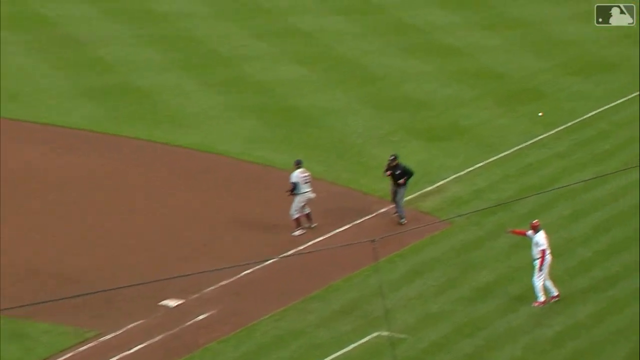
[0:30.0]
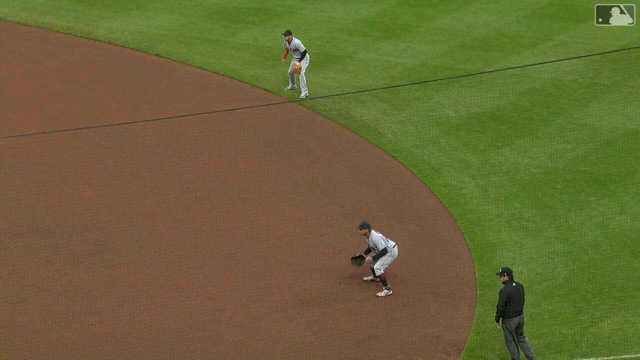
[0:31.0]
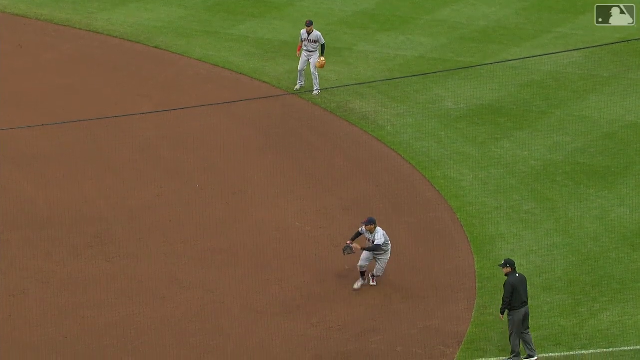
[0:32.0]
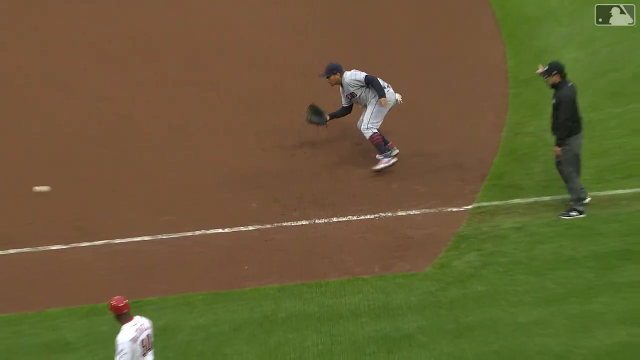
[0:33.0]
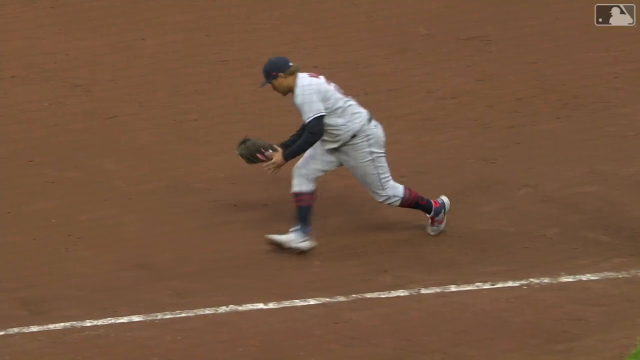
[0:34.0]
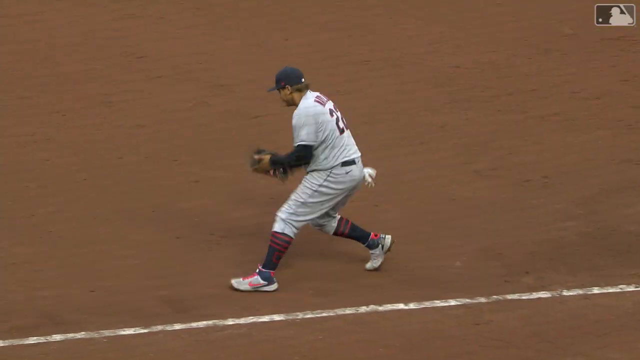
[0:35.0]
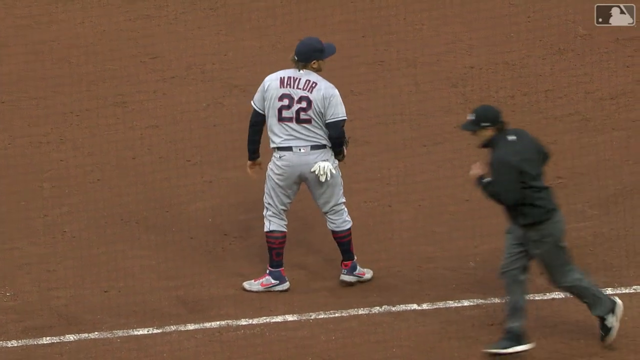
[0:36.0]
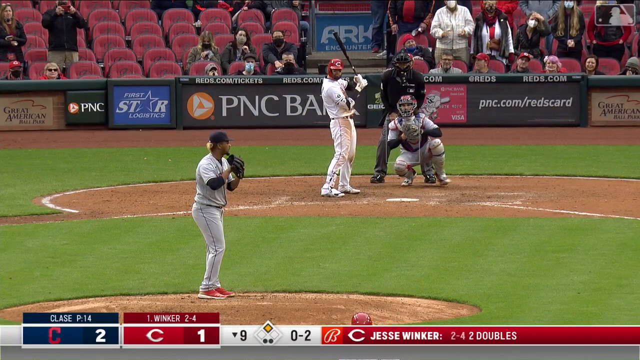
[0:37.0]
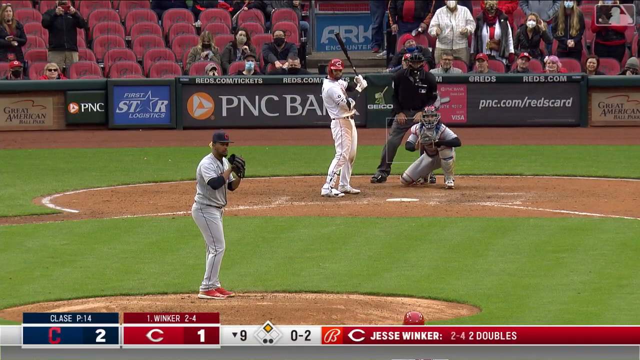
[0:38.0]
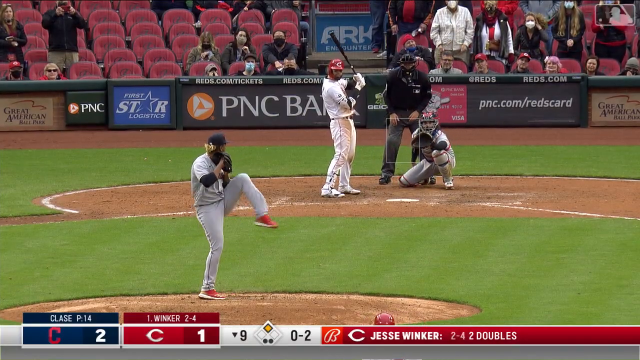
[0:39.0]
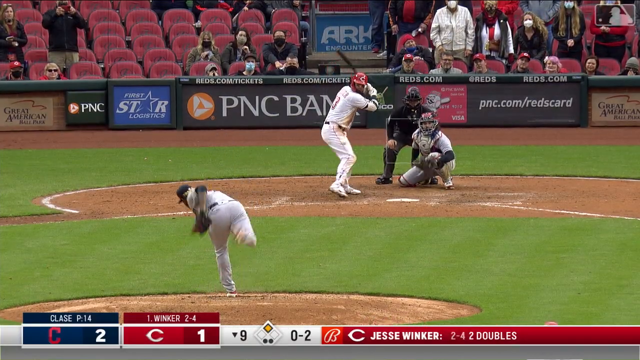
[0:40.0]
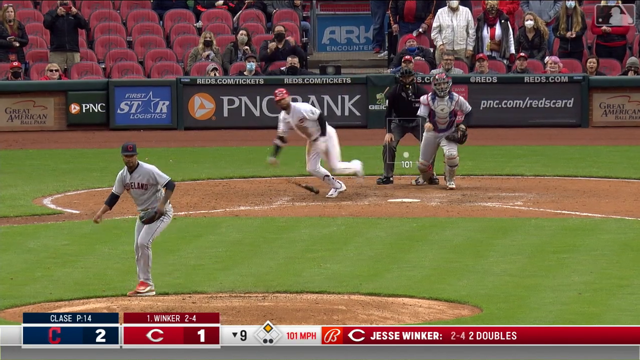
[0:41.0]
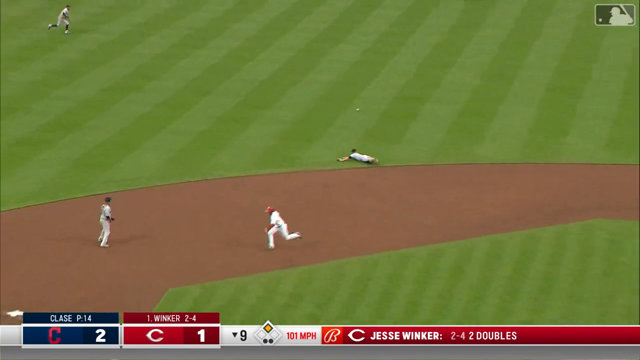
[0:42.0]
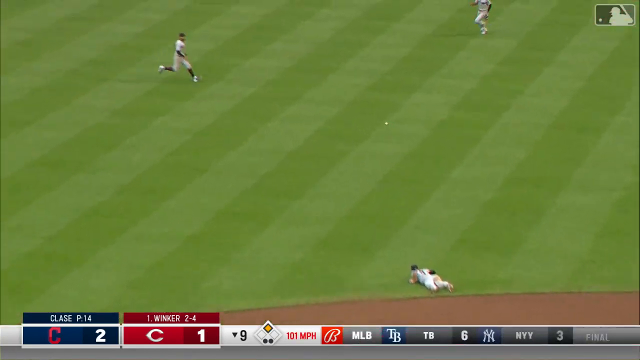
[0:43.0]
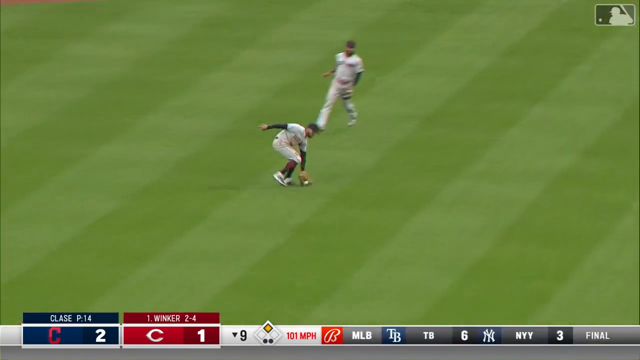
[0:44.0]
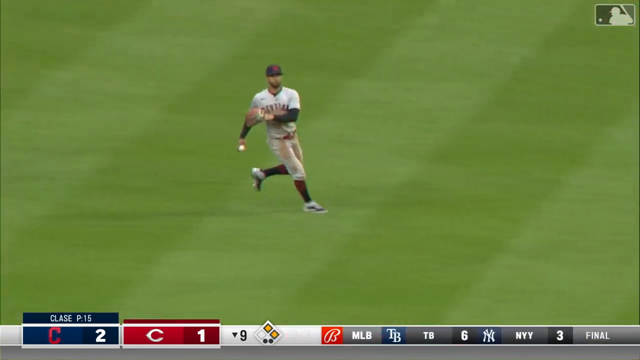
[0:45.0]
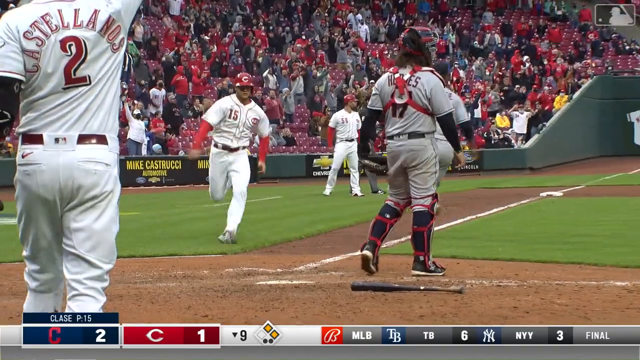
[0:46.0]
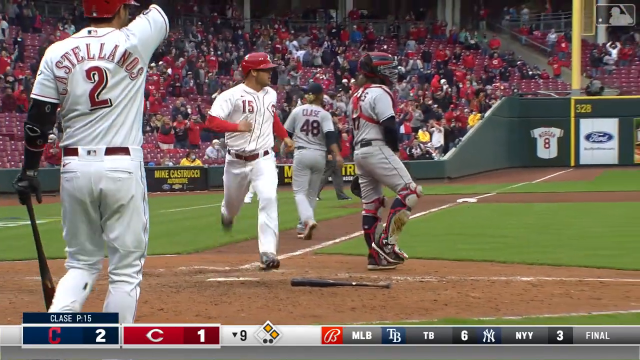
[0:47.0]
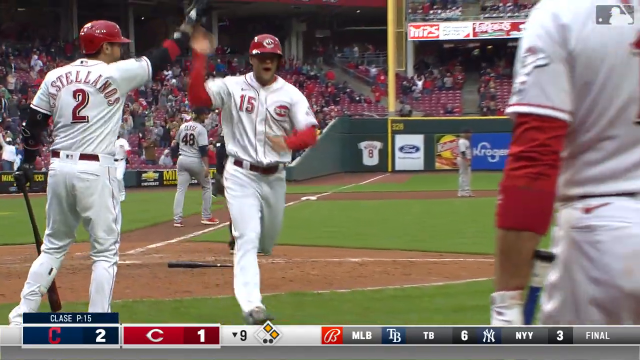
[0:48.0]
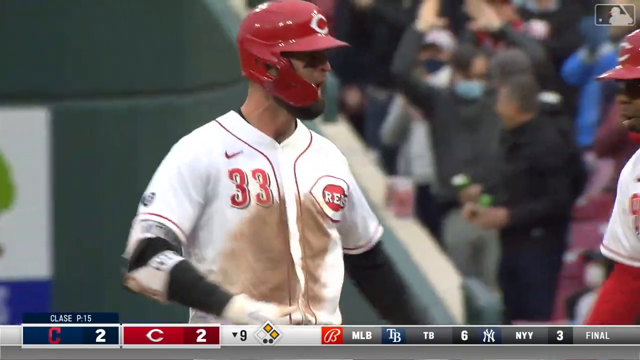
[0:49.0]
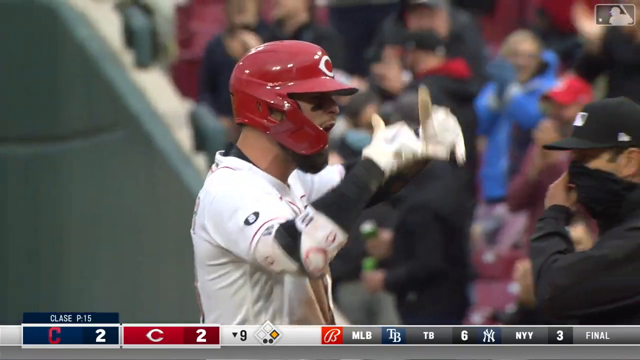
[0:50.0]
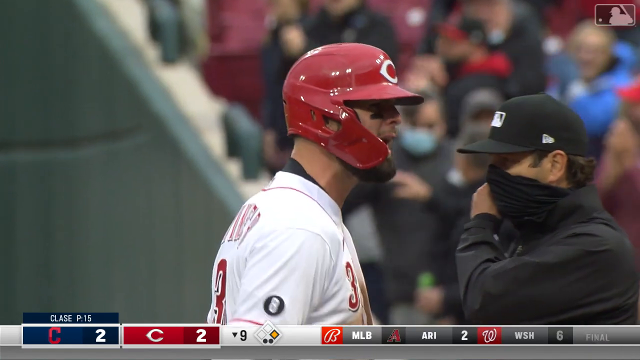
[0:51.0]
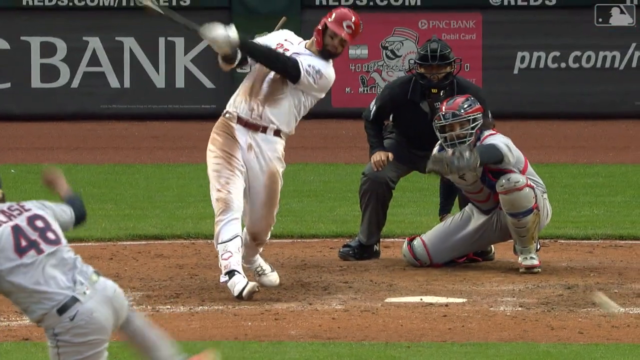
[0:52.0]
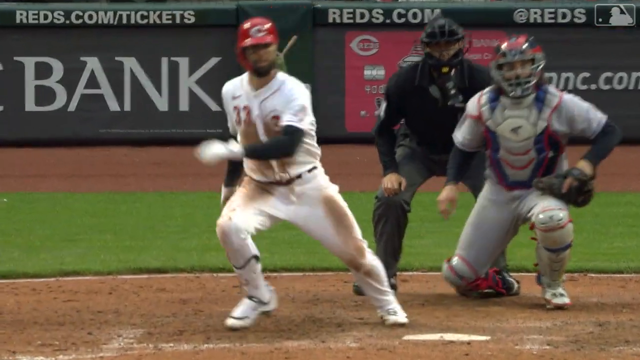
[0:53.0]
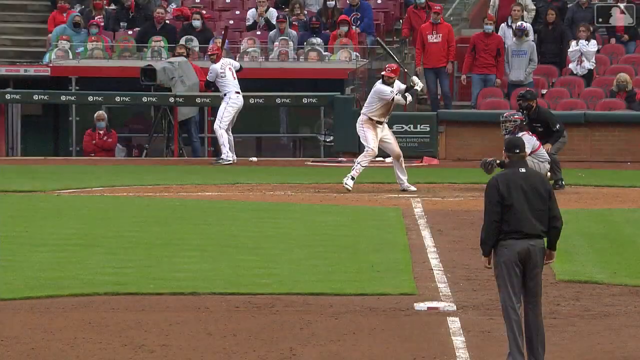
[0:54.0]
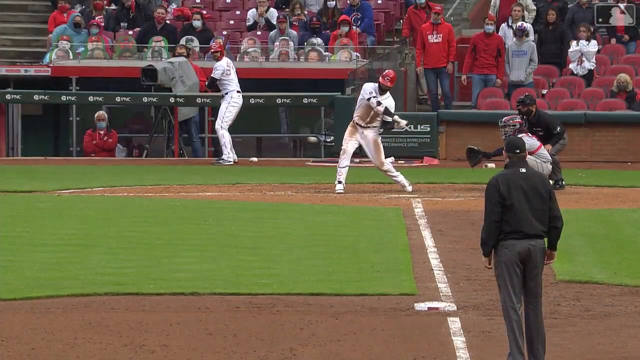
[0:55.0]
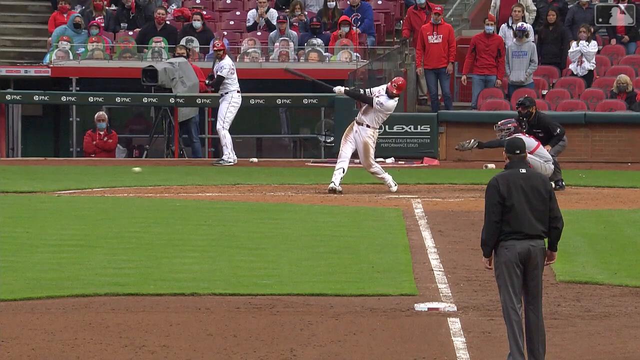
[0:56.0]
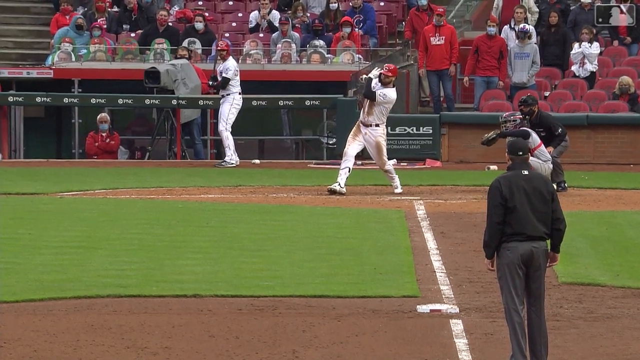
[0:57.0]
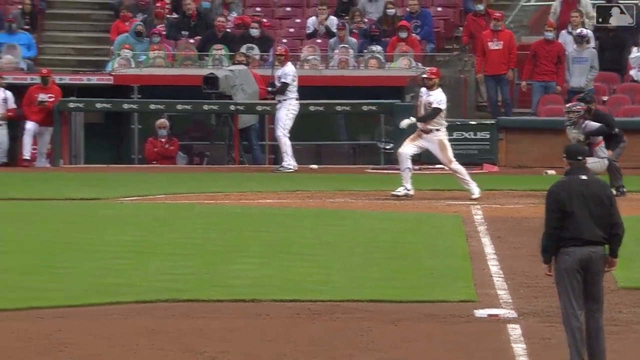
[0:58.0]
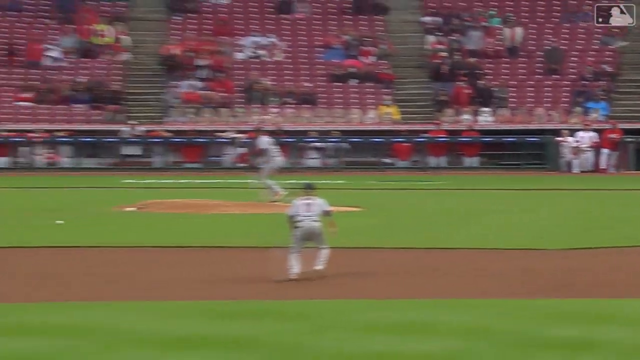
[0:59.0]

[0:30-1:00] A slow-motion replay shows players missing the ball. The score, 0-2, appears at the bottom of the screen, and a banner shows the player's name, "Jesse Winker." Again the batter throws the ball, and the other team struggles to catch it. The team in red scores a goal and the players cheer with each other. Another slow-motion replay shows what happened. A small translucent MLB logo is in the top right of the video. Some of the players have their gloves in their back pockets while playing. Some people in the audience stand up and clap for the team. On the back border of the field there is a large PNC Bank logo with the bank's website listed next to it.